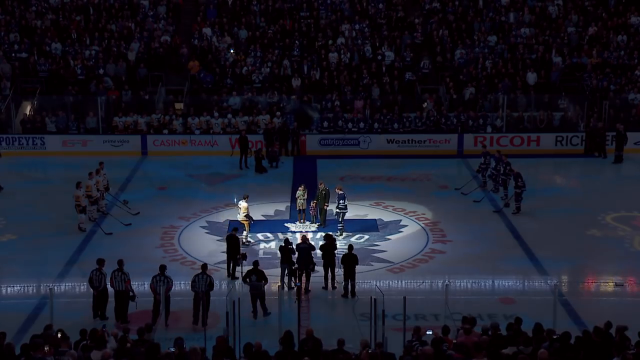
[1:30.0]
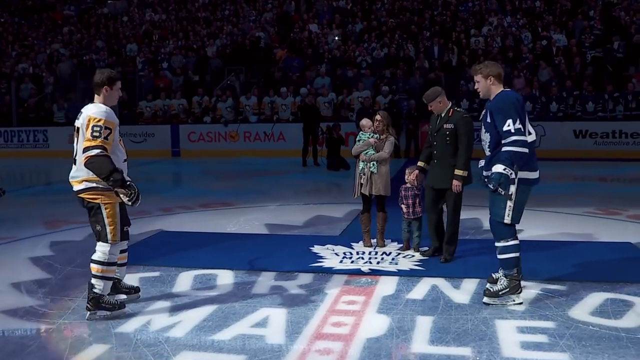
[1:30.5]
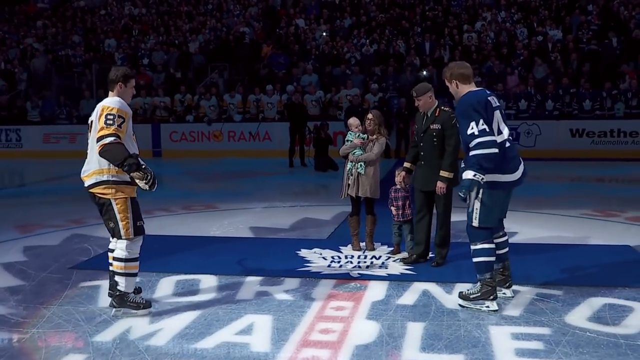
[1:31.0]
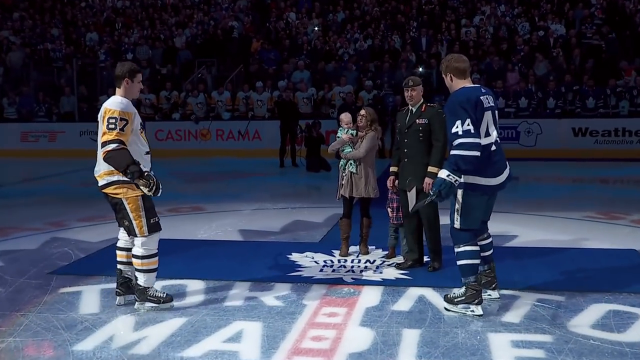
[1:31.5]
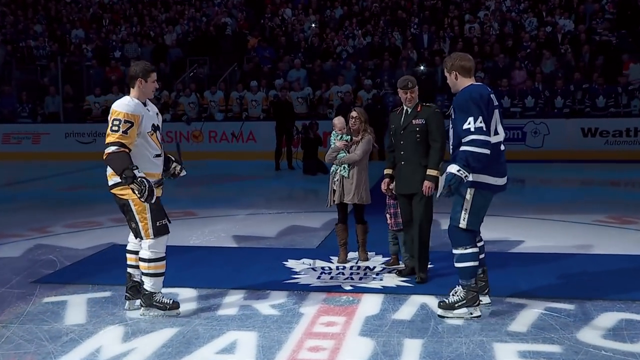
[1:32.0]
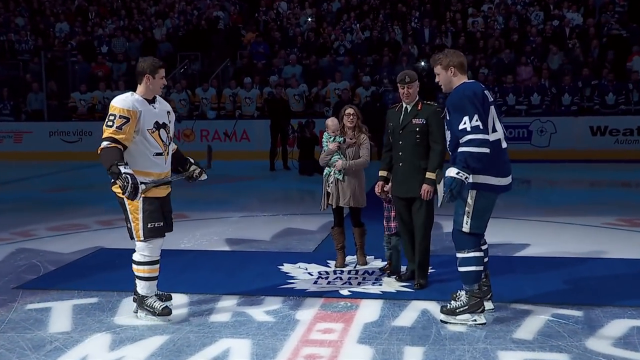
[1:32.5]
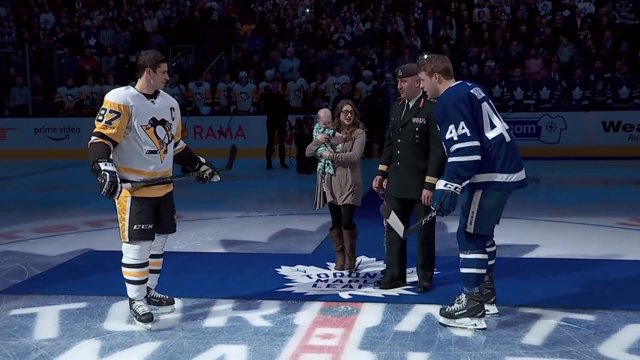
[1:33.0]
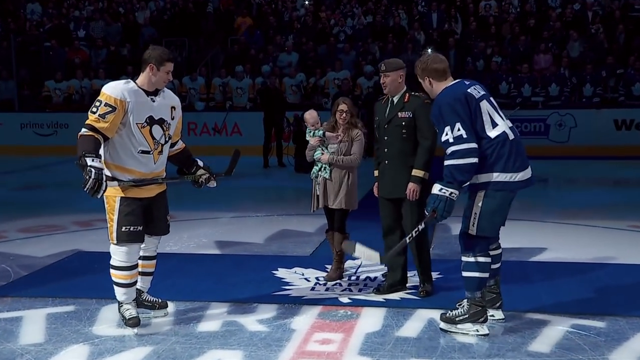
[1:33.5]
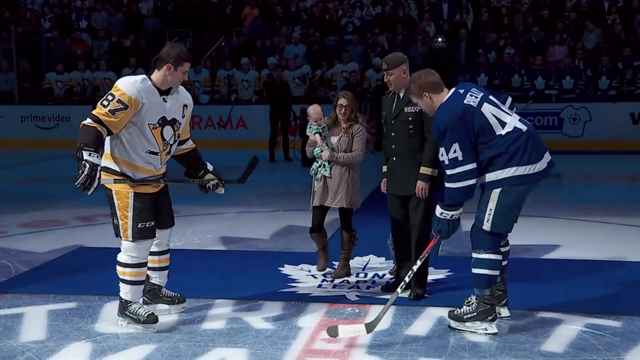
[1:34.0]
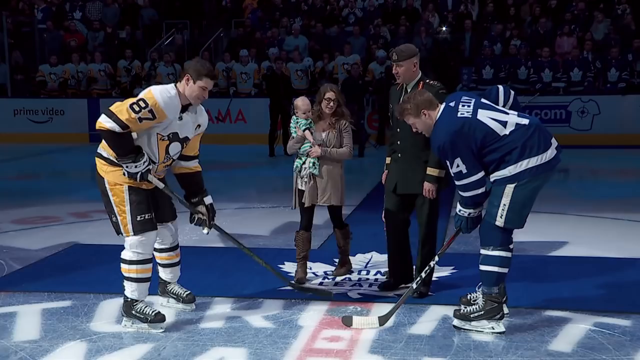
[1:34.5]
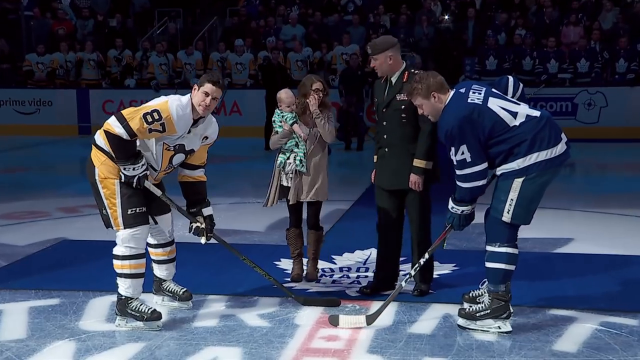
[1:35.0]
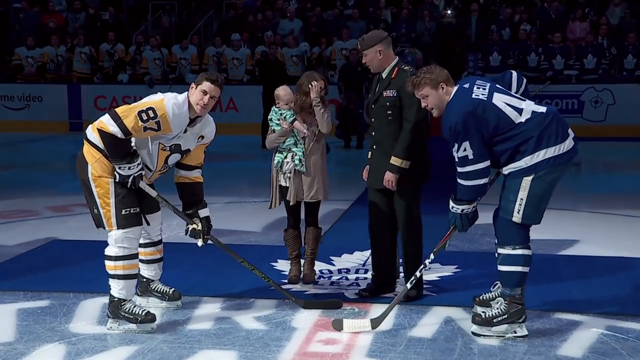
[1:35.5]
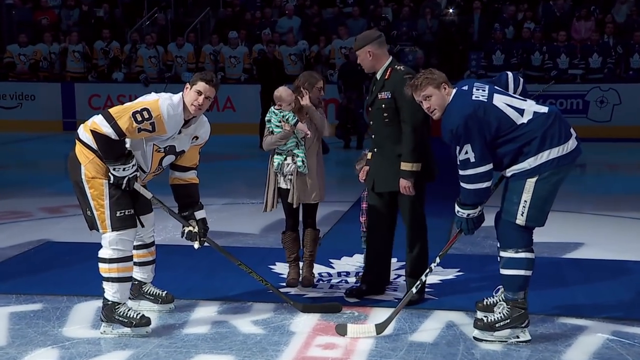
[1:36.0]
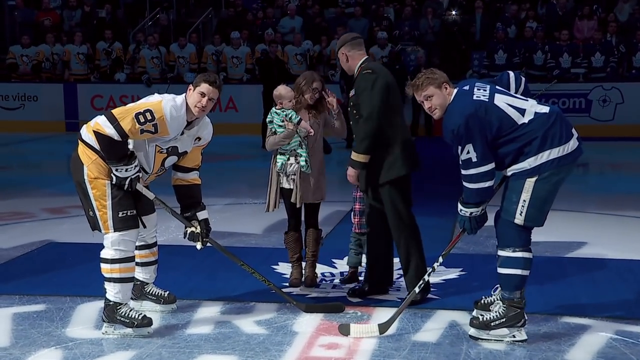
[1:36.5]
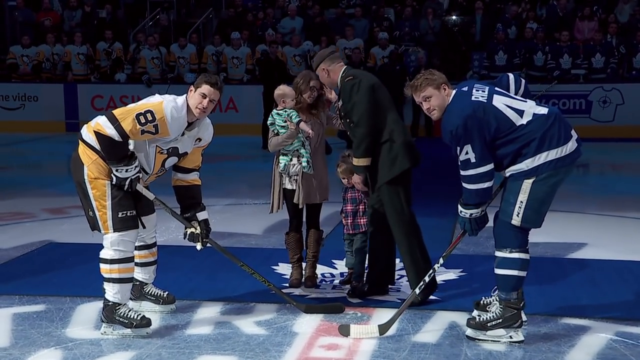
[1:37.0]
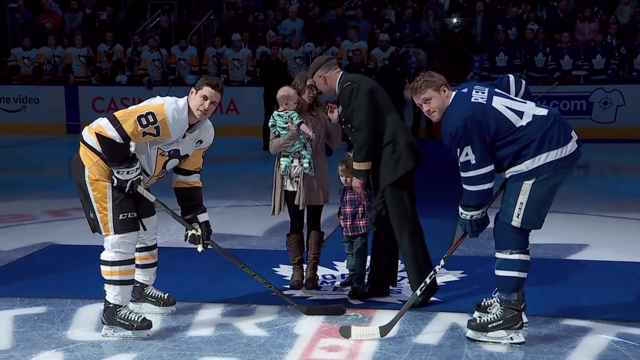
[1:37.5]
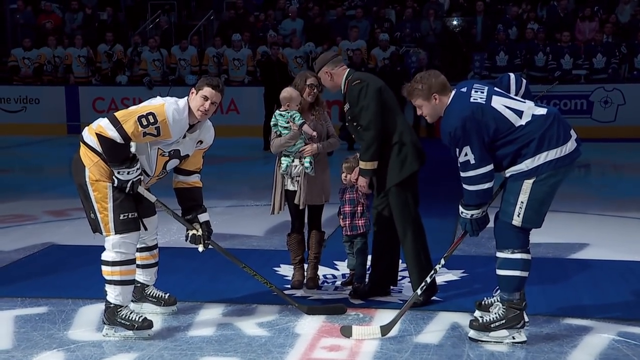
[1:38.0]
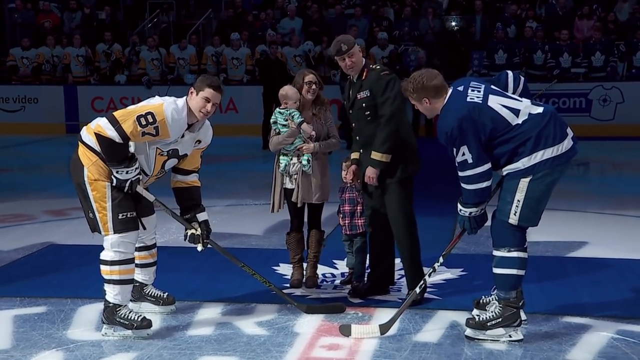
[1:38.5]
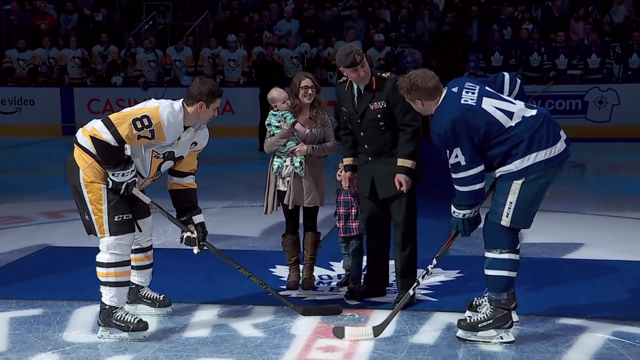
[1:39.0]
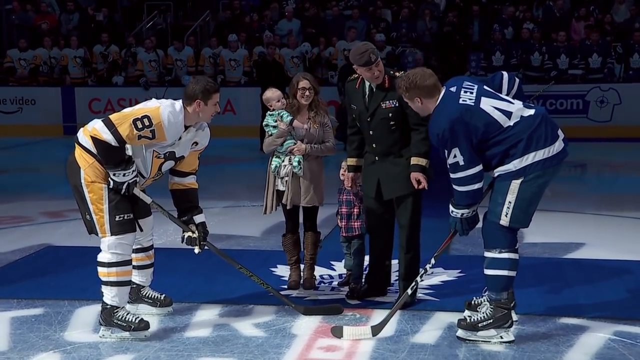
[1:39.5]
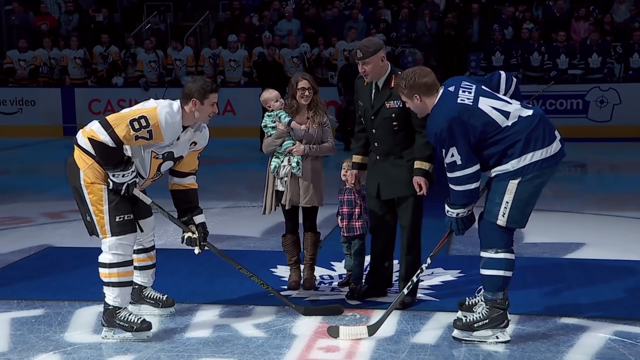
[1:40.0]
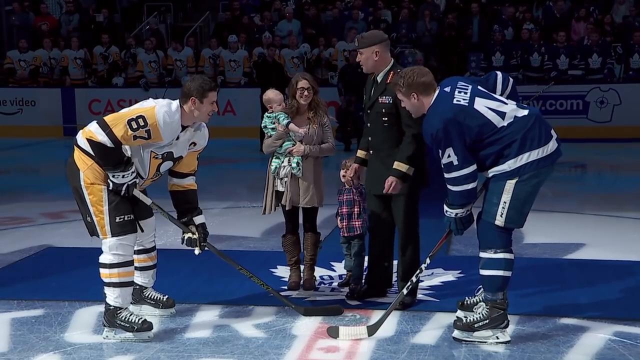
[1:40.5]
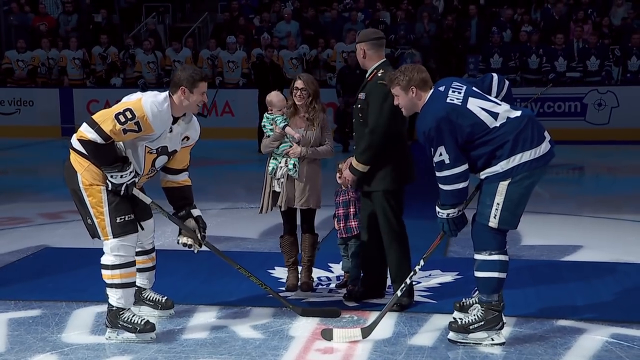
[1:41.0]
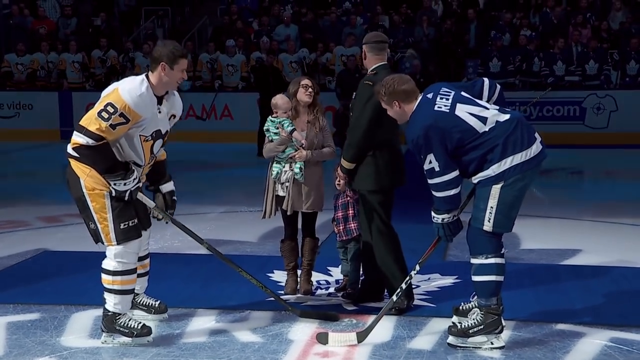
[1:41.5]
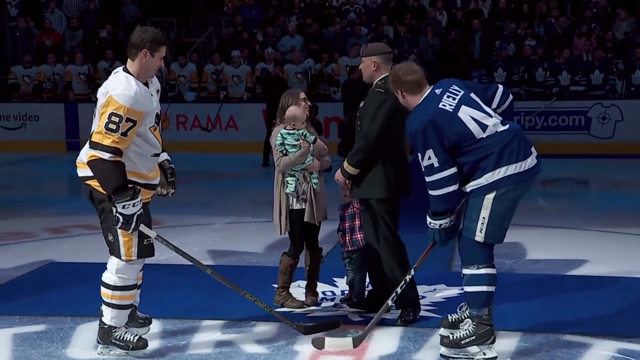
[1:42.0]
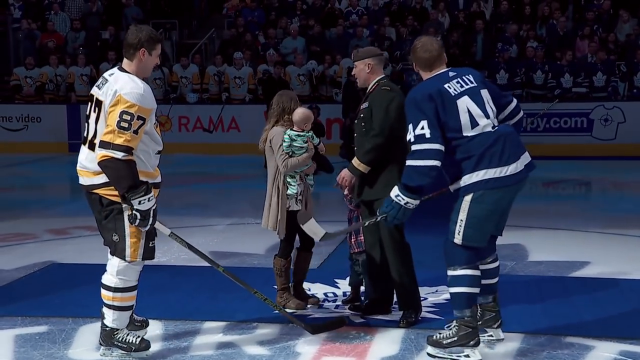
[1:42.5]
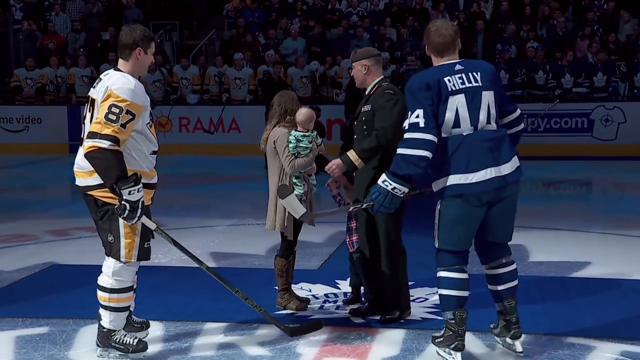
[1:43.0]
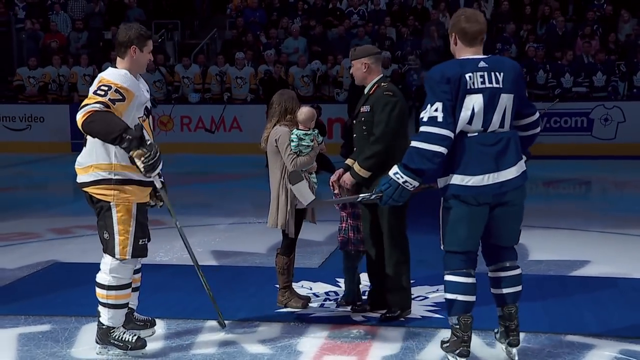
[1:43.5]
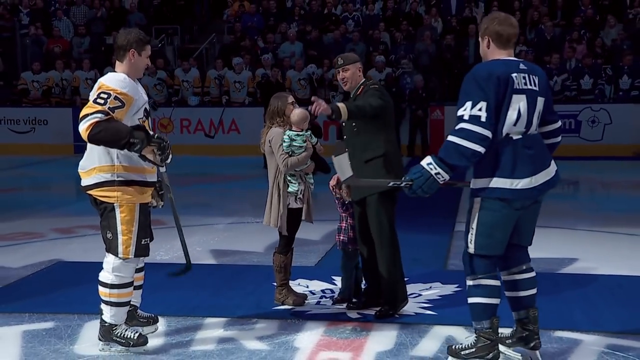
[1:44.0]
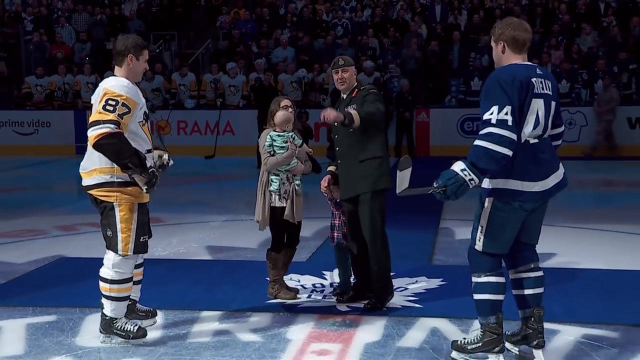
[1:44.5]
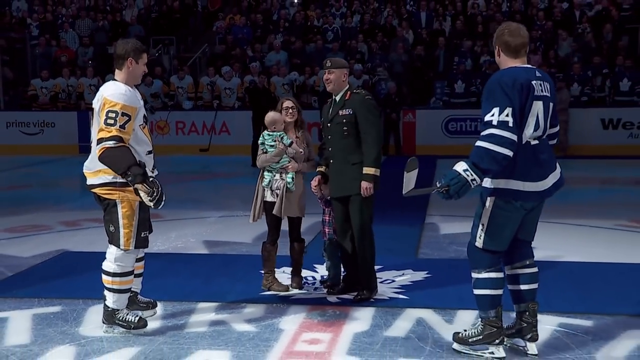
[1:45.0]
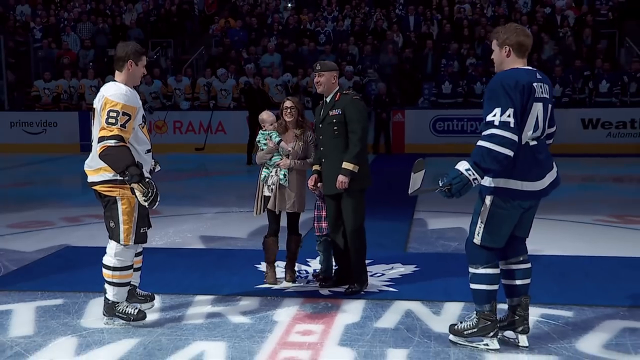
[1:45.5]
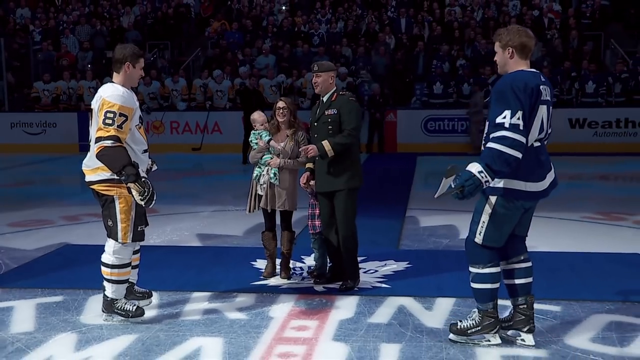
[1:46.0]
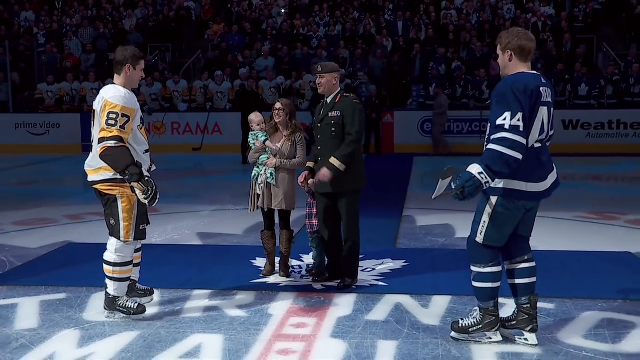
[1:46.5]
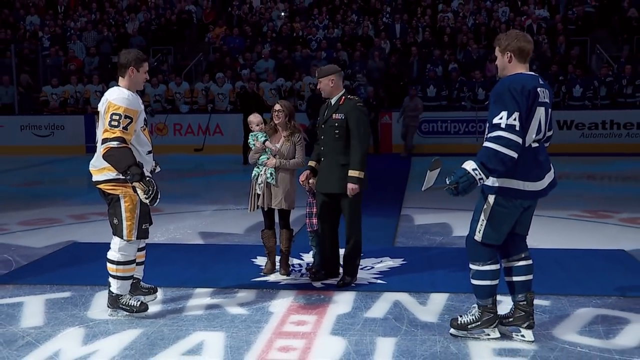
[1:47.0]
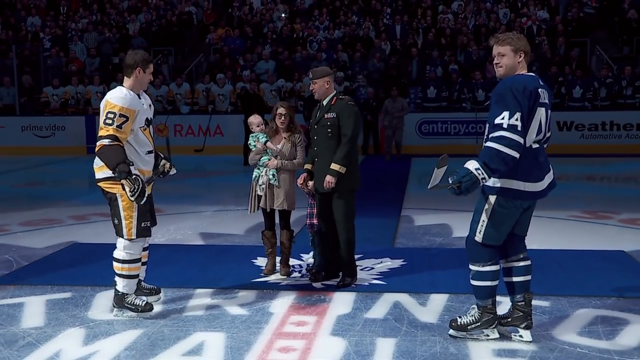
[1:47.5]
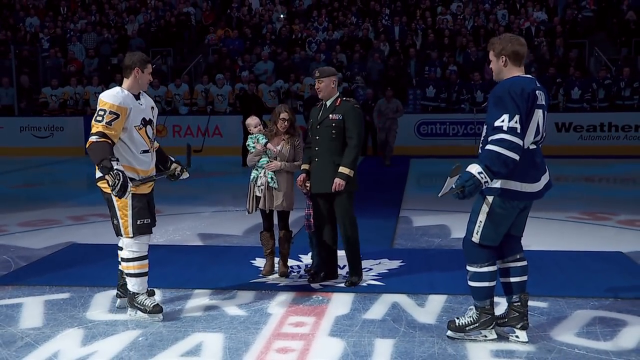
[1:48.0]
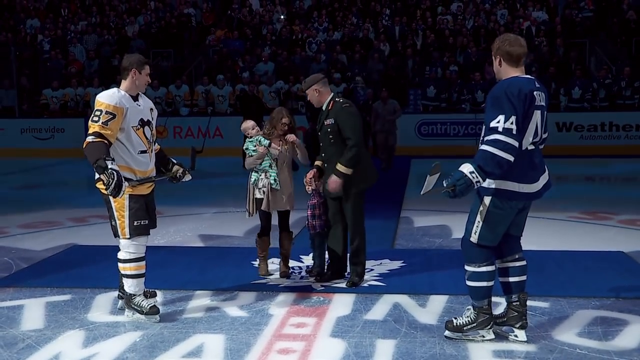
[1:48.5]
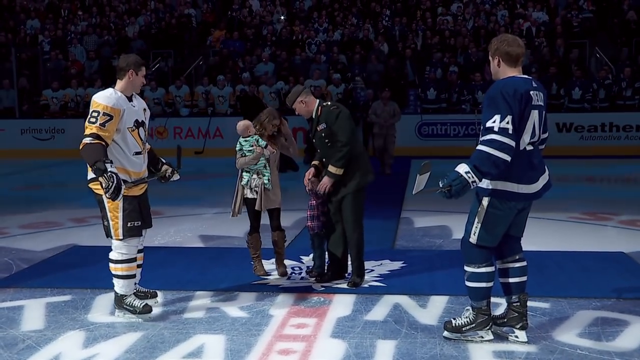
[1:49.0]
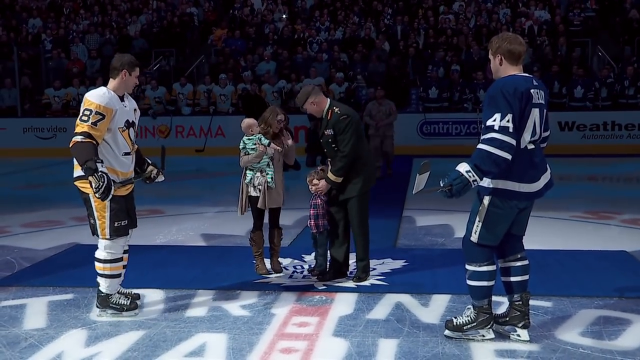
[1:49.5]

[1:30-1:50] Light shines down on the middle area where they stand. The blue runner forms an upside-down T, coming out from the far end where there is a lot of advertising and then running horizontally. The woman stands holding the baby, seen from a distance. A few referees stand in a row in front of the glass at the bottom left, and a row of people stands front and center taking pictures of the woman and the others. Sidney Crosby and the player across from him, Riley, pose holding their sticks, turning and smiling and acting out a face-off while the woman is behind them. Both turn toward the camera up close. The uniformed soldier bends over and says something to number 44 and to Crosby, who smiles and laughs briefly while standing up. The players look small, and the woman is very petite compared to Crosby. She turns and looks about ready to walk away, pulling her hair behind her for a moment.